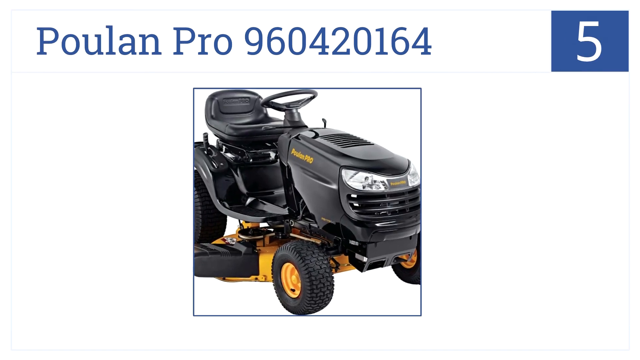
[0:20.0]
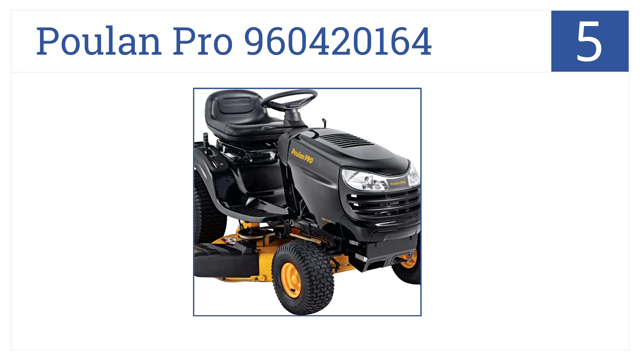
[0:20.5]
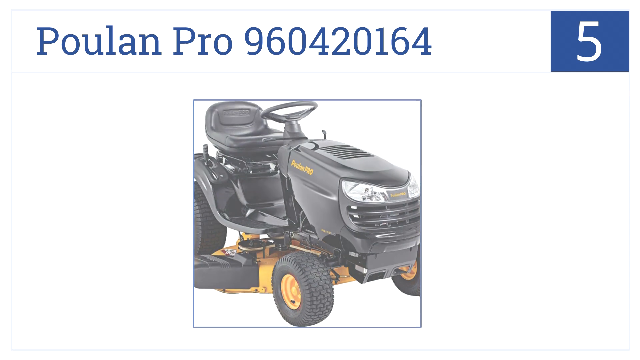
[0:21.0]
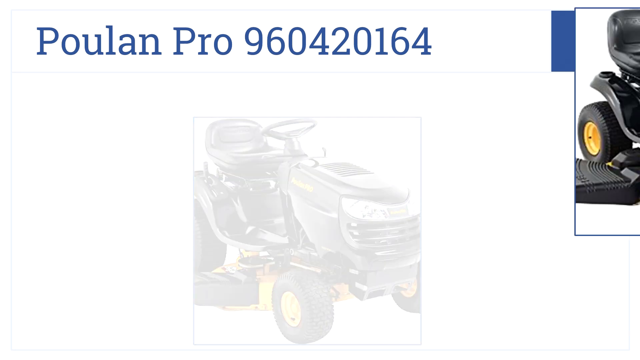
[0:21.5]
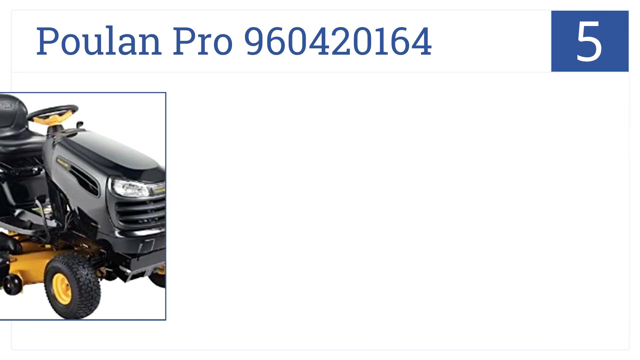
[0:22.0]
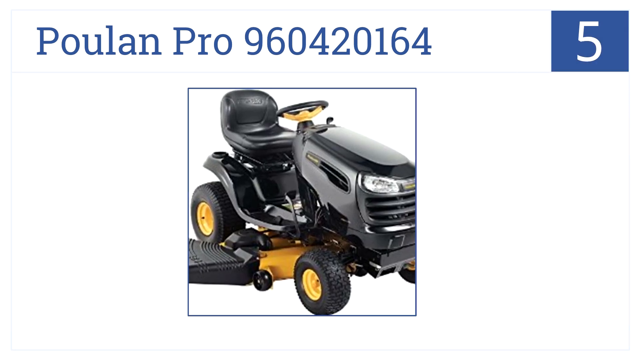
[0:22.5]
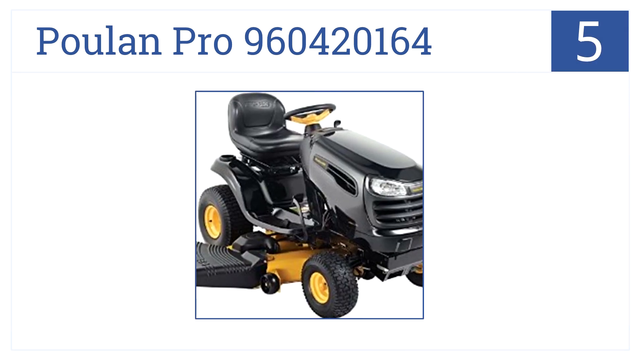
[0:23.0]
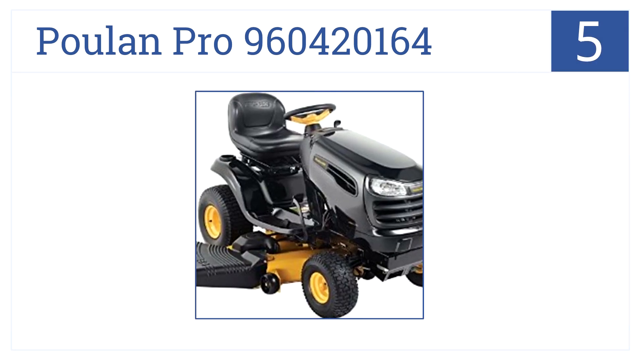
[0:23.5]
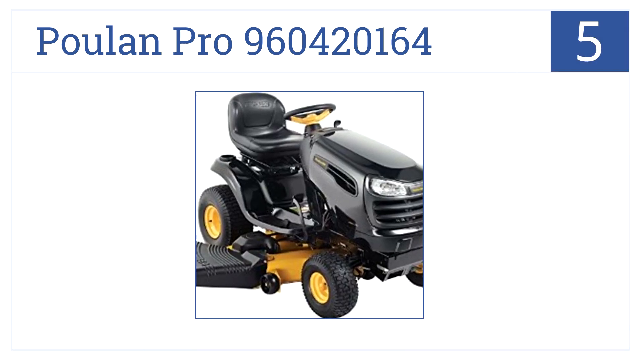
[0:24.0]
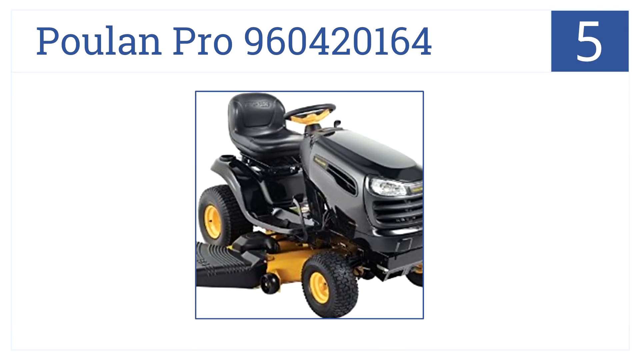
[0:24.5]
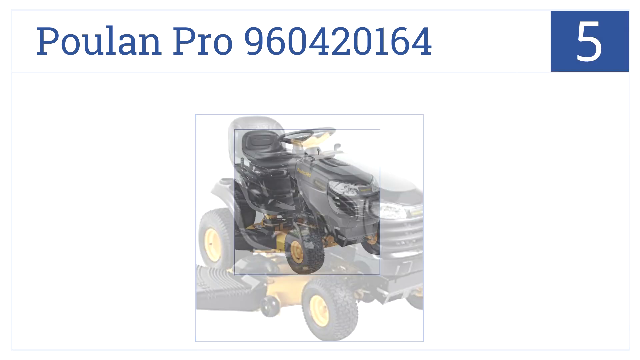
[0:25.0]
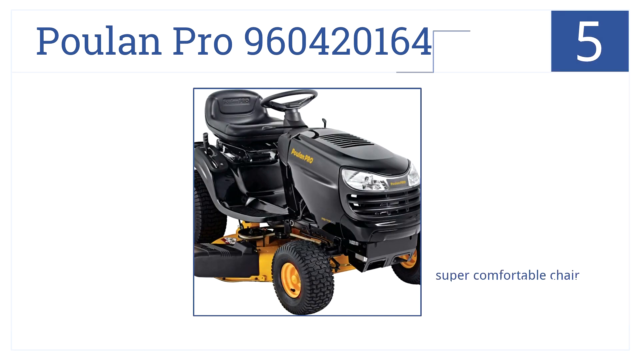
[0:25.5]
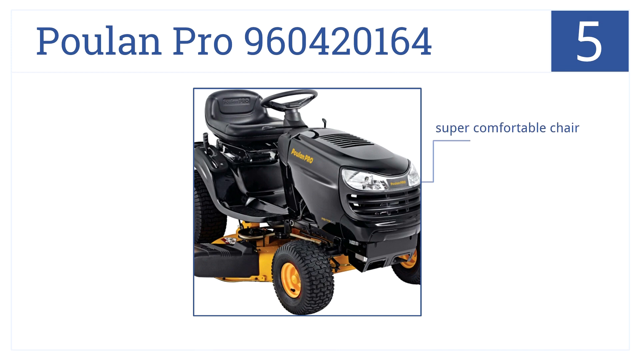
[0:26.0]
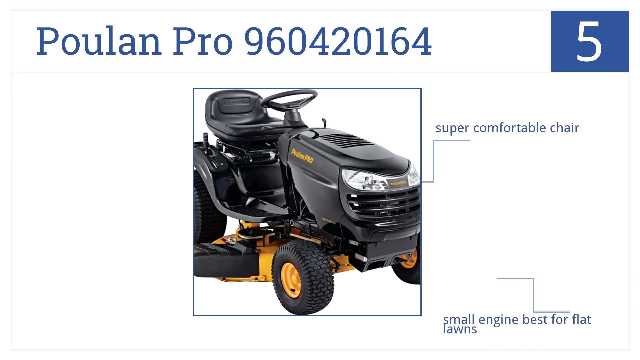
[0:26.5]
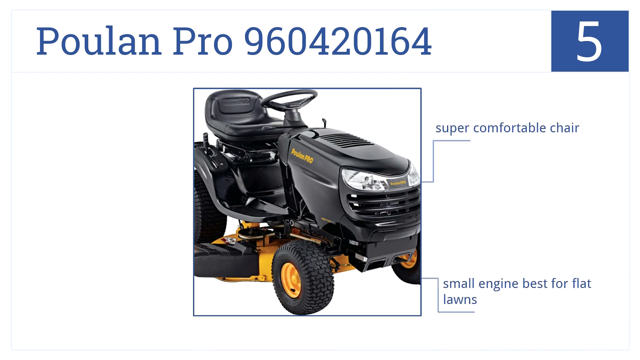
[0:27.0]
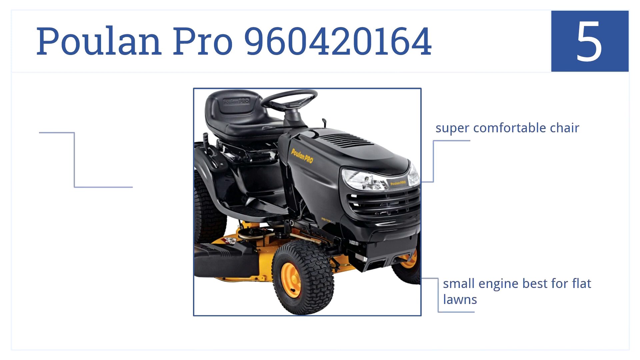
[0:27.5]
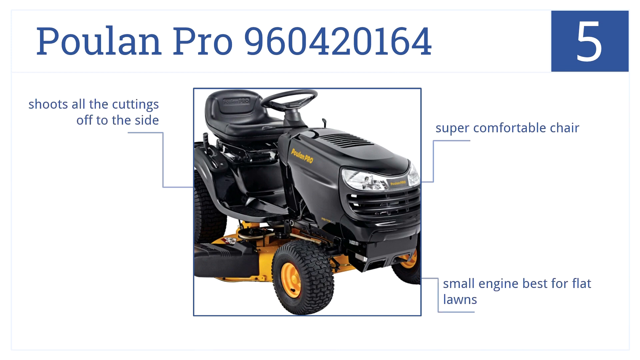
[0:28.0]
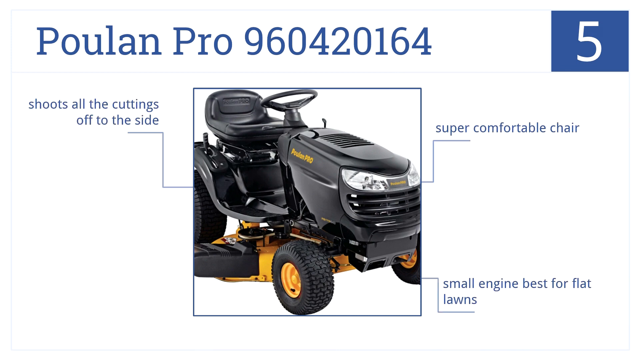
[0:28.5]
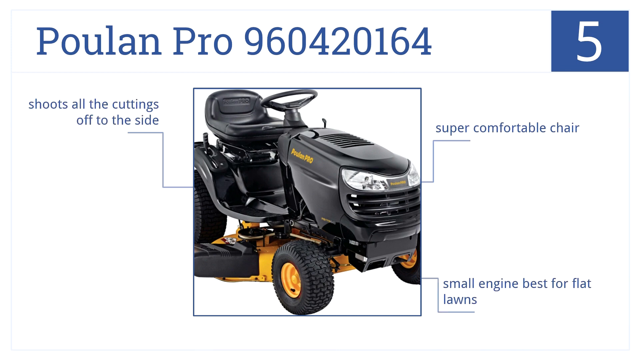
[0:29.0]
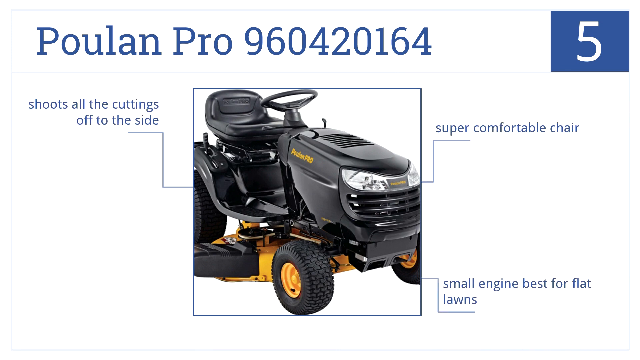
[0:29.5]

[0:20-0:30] The 5 remains at the top right of the screen with a blue background and white text. On the top left, the blue words "Poulon Pro" remain with numbers falling behind them. The large image of the black tractor stays in the middle of the screen, then fades away down the screen. A new image of a different black tractor rotates in from the right side to the middle; it looks very similar, with a black and yellow color format and the same size and shape. Blue text appears on the right side reading "super comfortable chair, small engine, best for flat lawns." On the left side, more blue text appears reading "shoots all the cutting off the side."